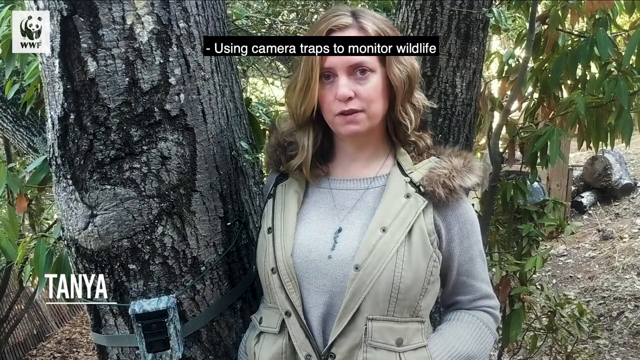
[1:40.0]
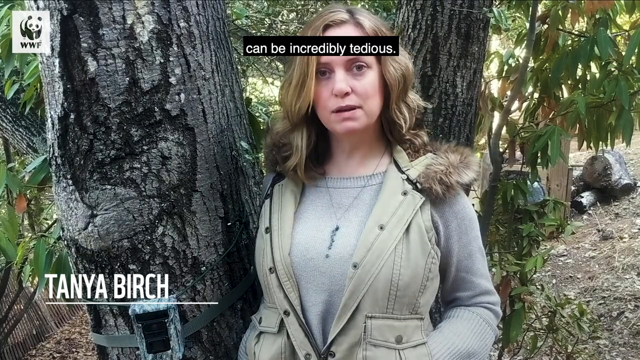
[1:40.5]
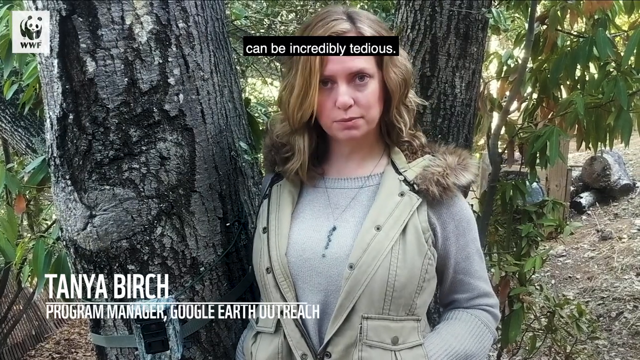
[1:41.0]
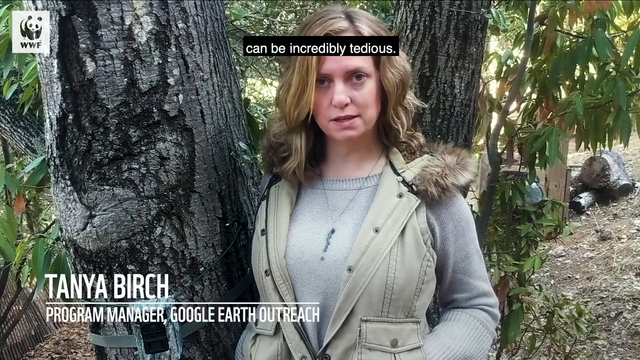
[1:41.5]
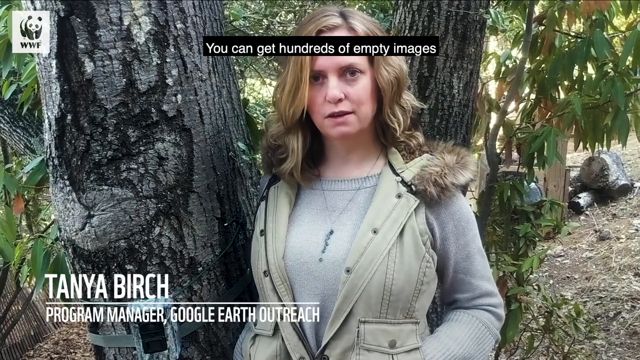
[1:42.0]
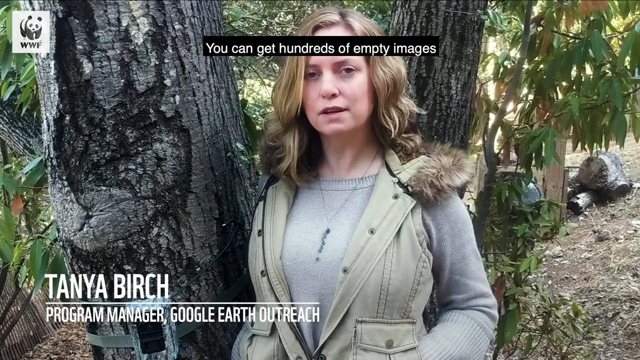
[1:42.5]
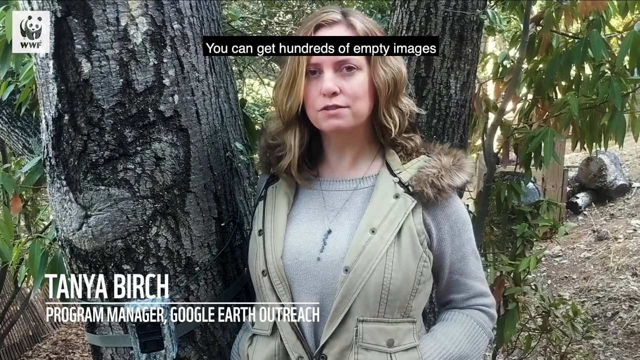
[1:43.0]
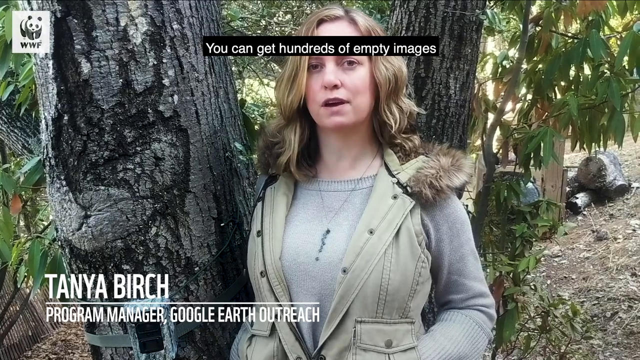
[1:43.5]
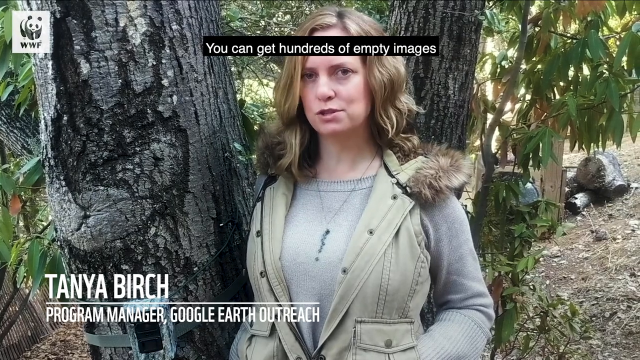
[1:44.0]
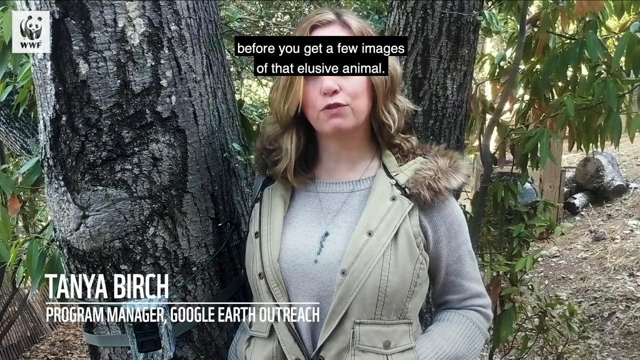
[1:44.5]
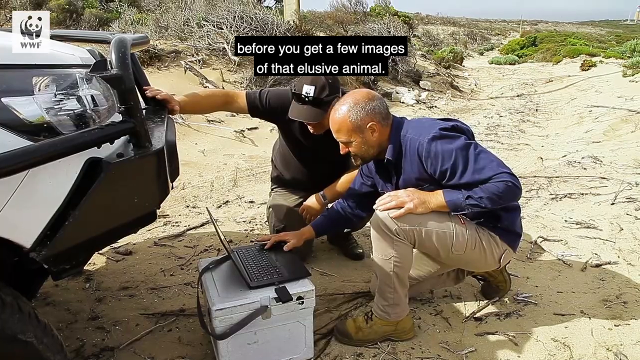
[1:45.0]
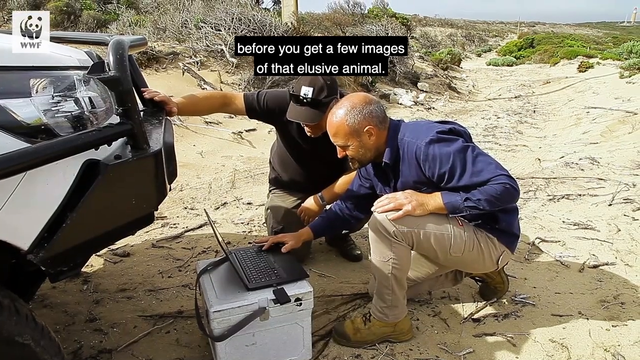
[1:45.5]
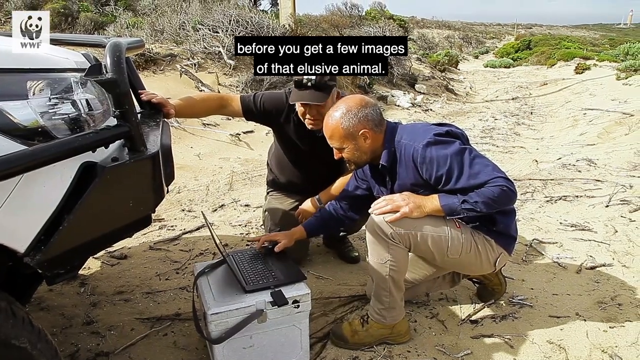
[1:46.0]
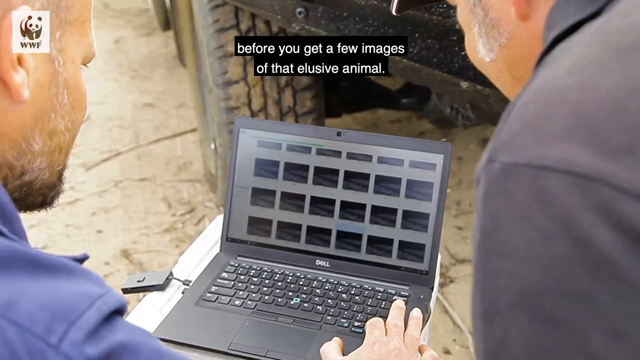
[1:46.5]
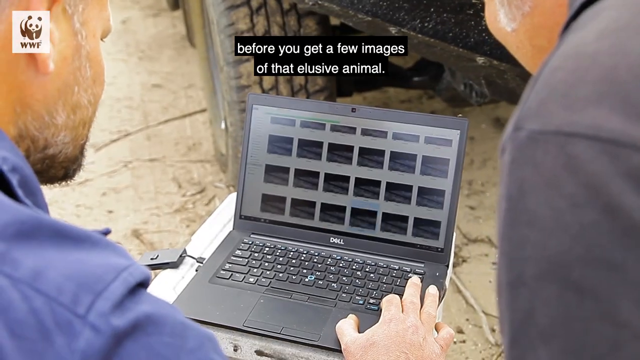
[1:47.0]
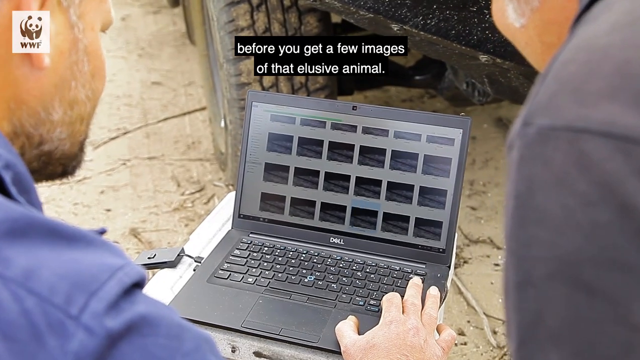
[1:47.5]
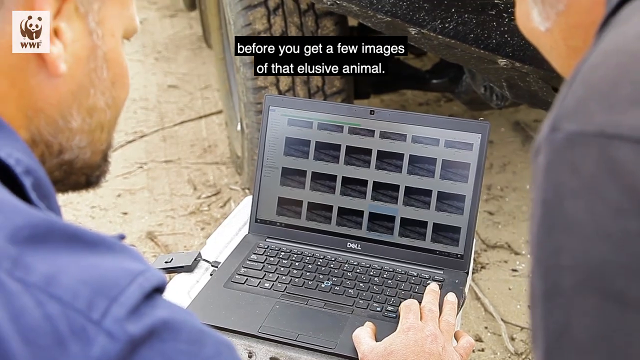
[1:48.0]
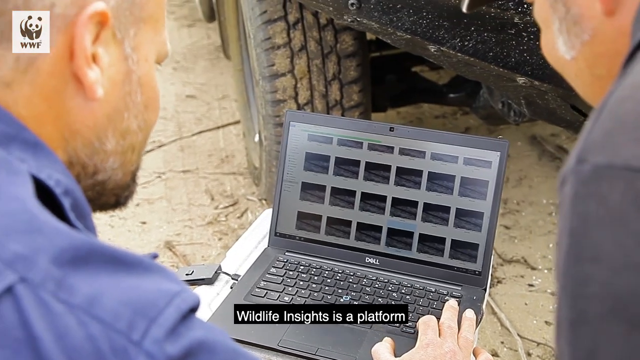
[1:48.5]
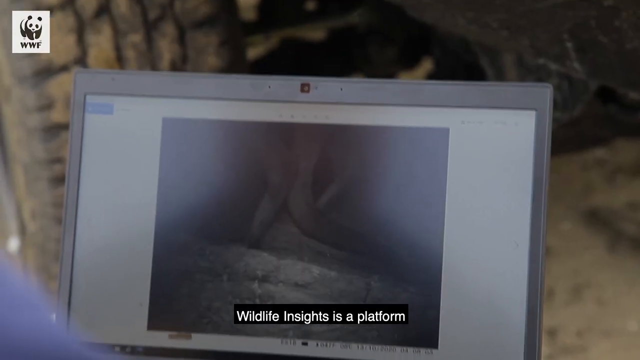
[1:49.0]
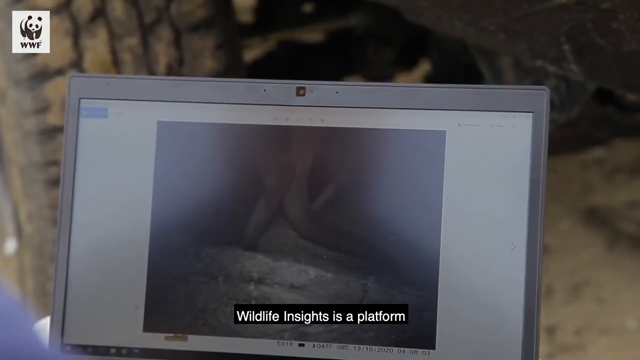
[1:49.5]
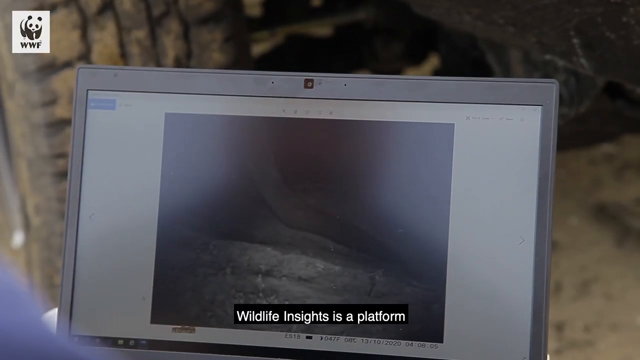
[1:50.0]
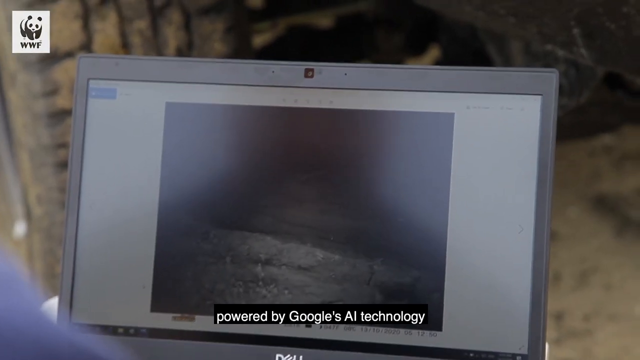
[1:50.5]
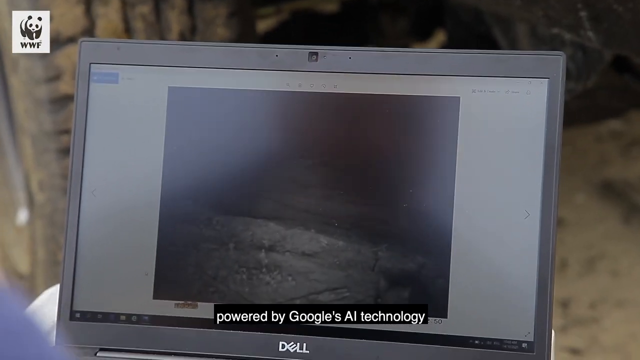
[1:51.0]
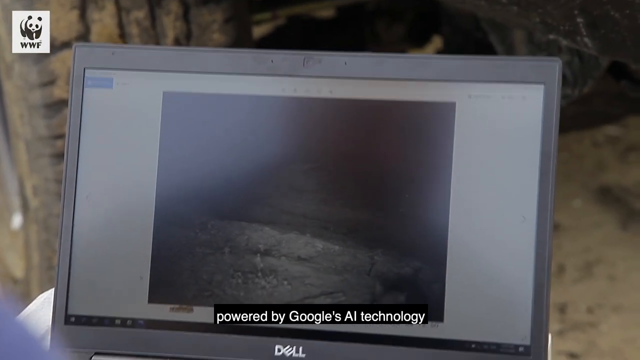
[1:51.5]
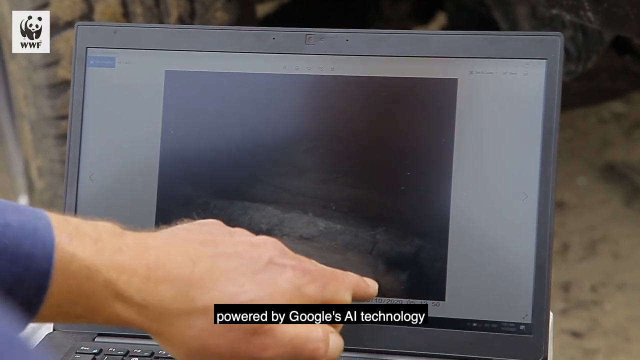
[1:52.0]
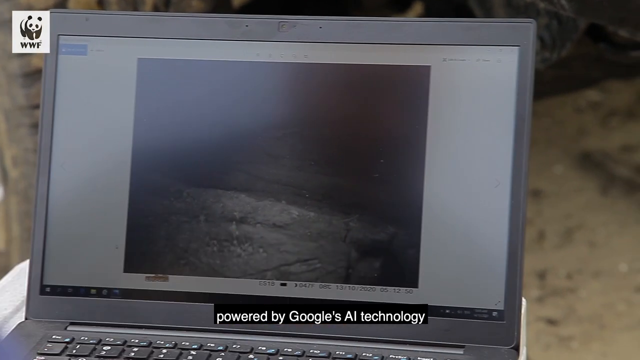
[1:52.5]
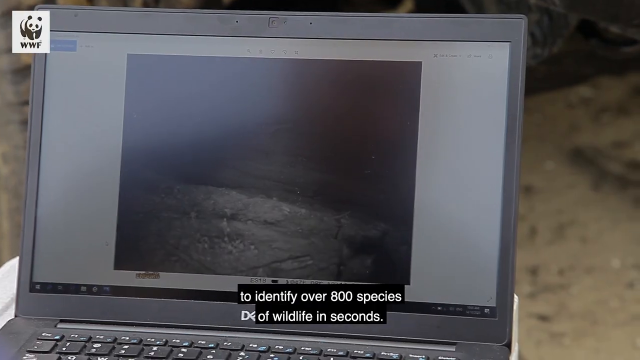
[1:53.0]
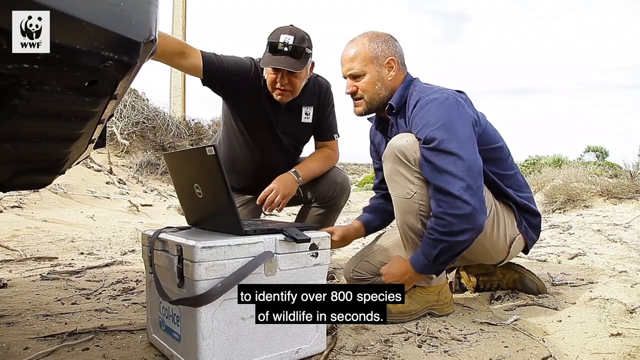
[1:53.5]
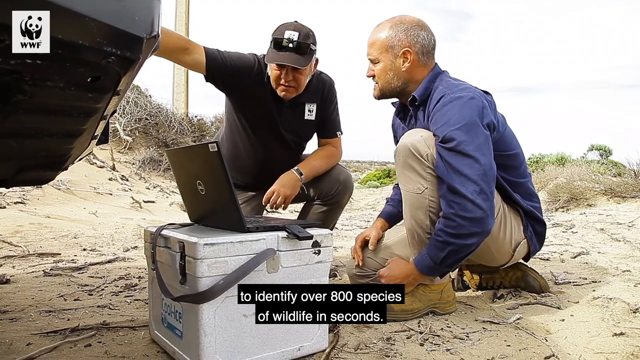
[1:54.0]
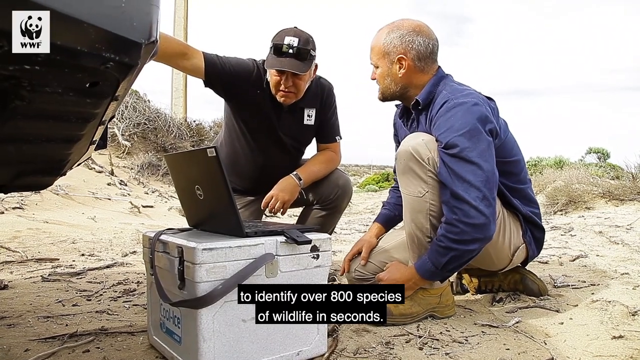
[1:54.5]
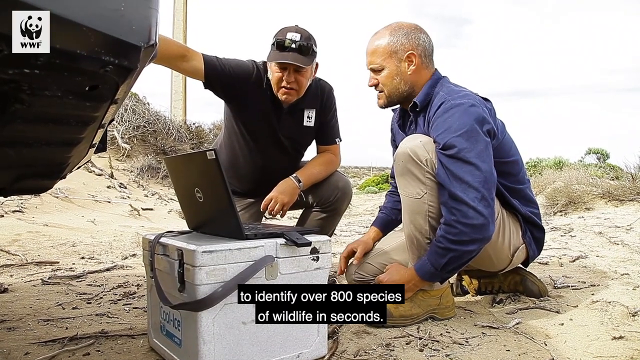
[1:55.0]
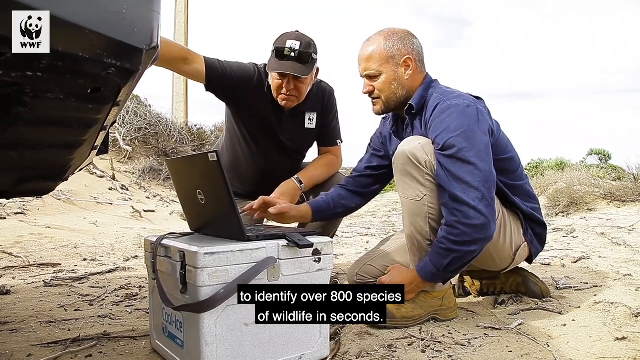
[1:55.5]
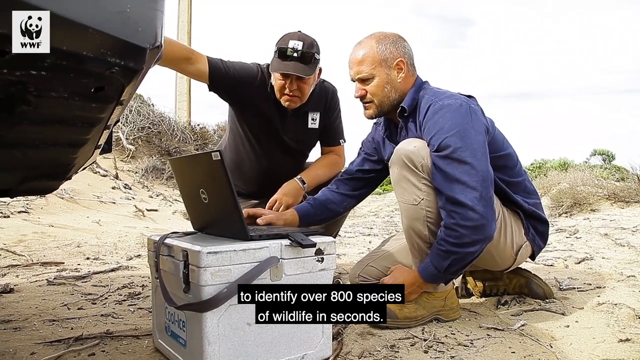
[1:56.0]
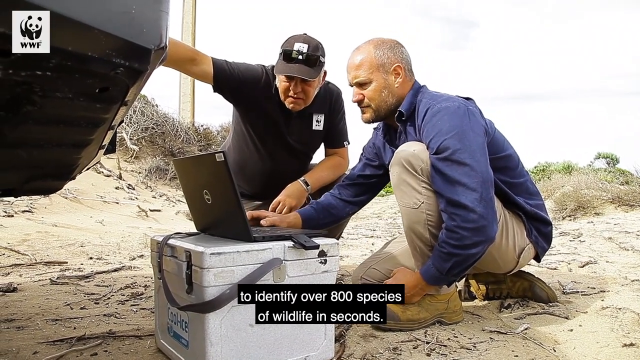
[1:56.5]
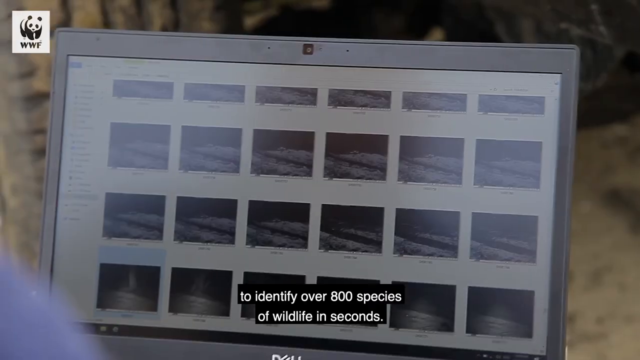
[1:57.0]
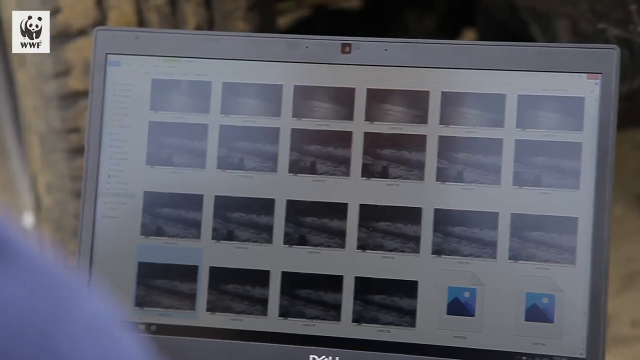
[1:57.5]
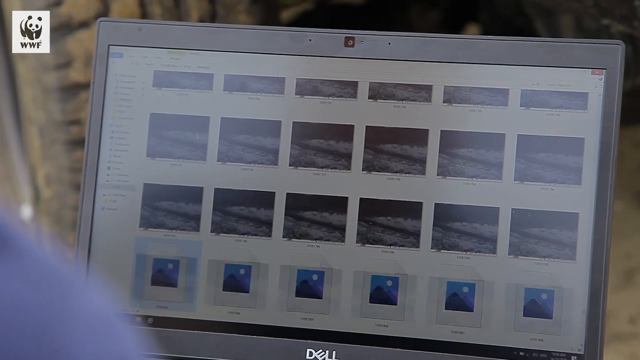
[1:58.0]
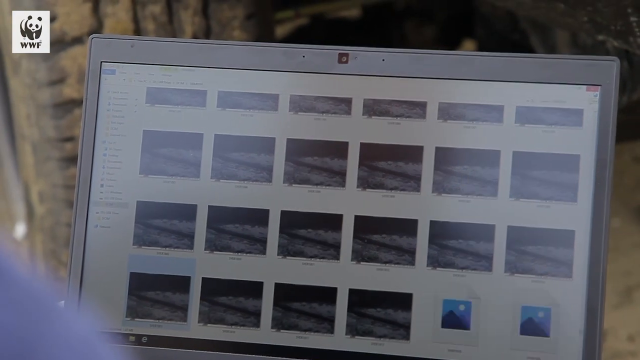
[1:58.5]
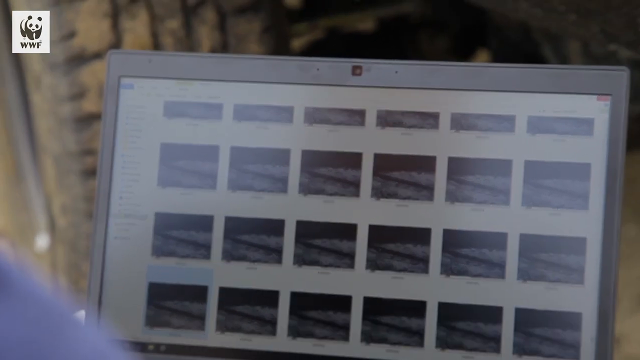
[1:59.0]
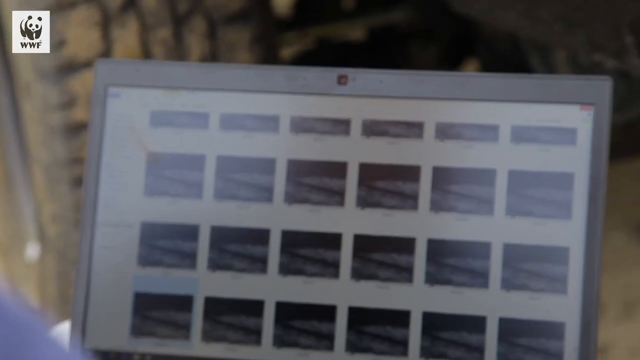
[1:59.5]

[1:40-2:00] Tanya Birch speaks to the camera briefly, then the camera cuts to the two men standing over a laptop. The man in the blue shirt interacts with the laptop, pressing one of the keys in the bottom right. Multiple videos appear to be on the screen, and the camera zooms in to show one of them being played, apparently the night vision video. A cut shows the two men from a different angle, standing or kneeling behind the computer. The man on the left, in the black shirt, appears to have his hand on the vehicle on the left side, just to the side of the laptop. The camera returns to the close-up of the laptop, where the person appears to scroll down the page, revealing more video thumbnails in long rows.